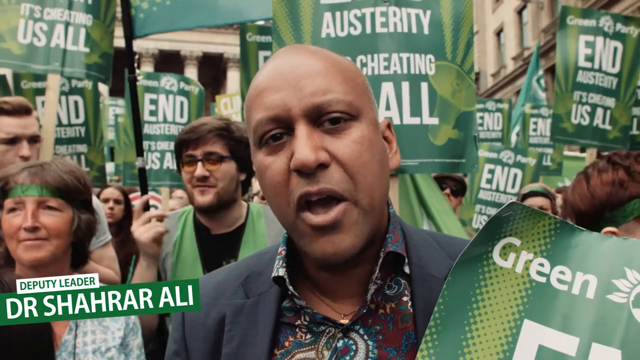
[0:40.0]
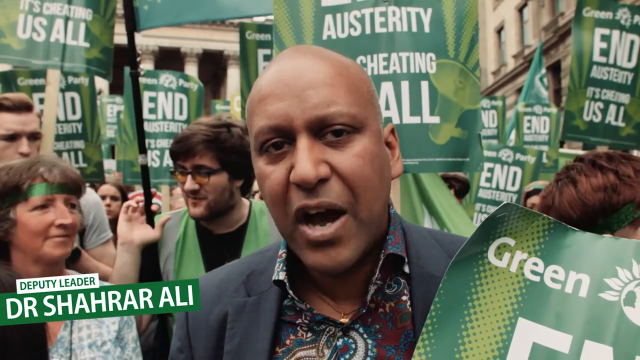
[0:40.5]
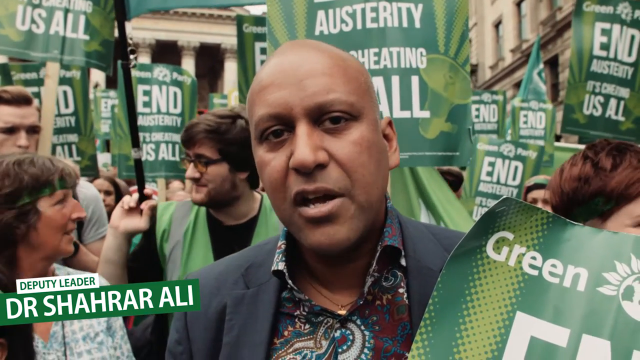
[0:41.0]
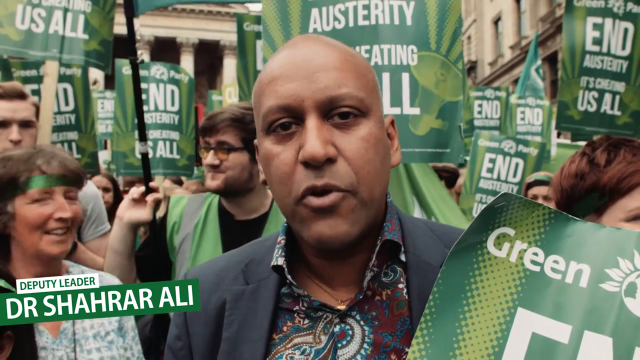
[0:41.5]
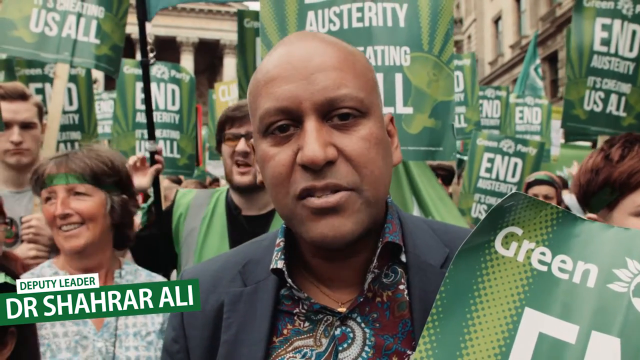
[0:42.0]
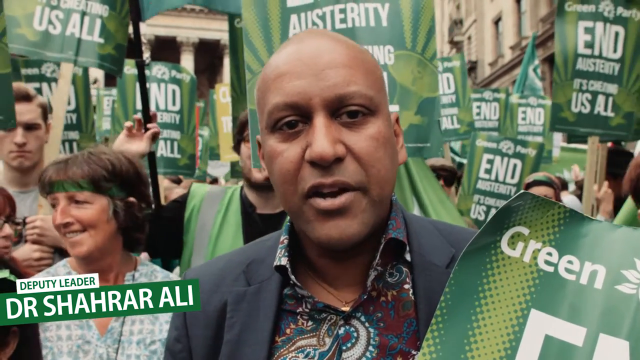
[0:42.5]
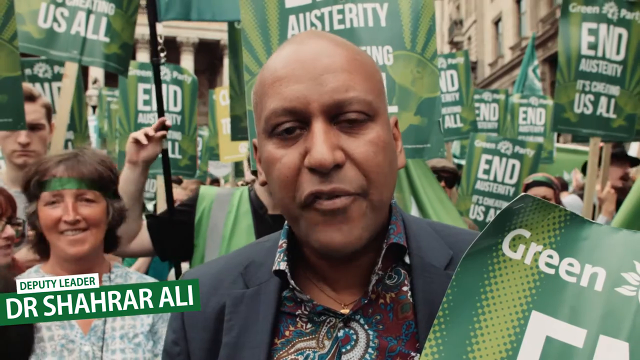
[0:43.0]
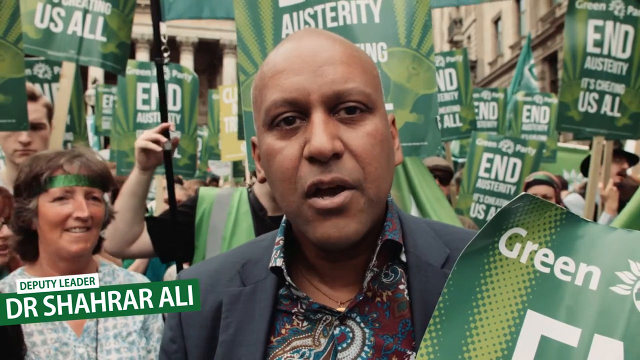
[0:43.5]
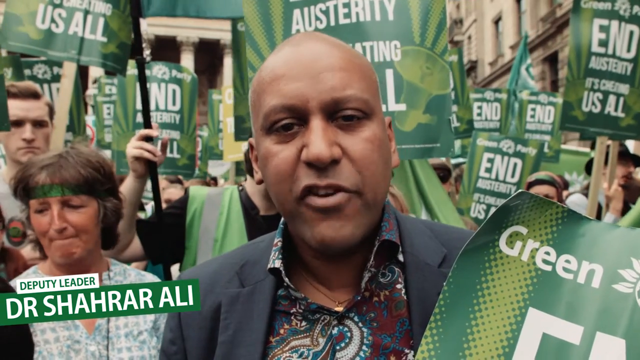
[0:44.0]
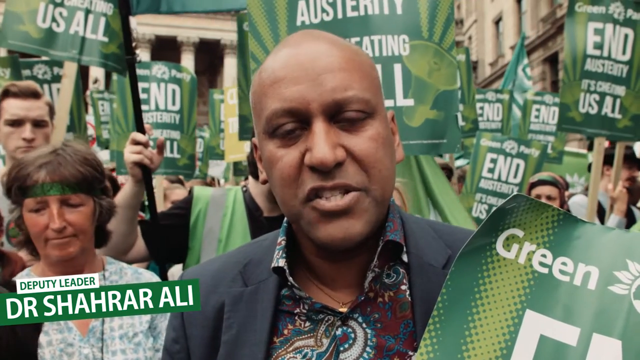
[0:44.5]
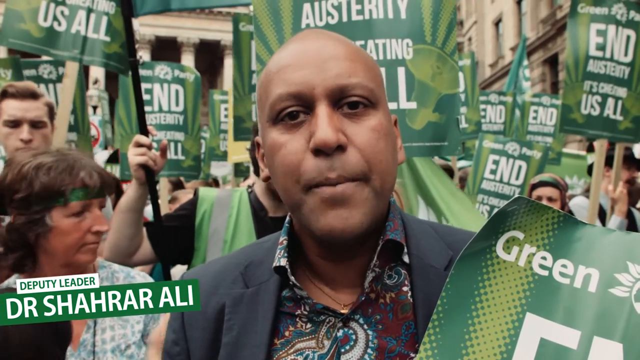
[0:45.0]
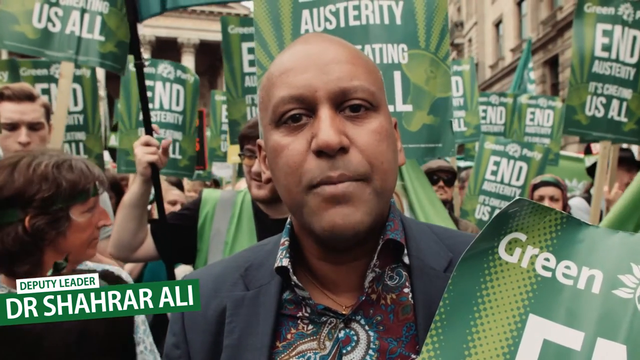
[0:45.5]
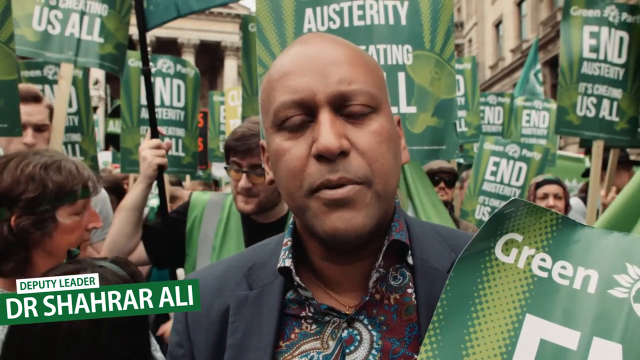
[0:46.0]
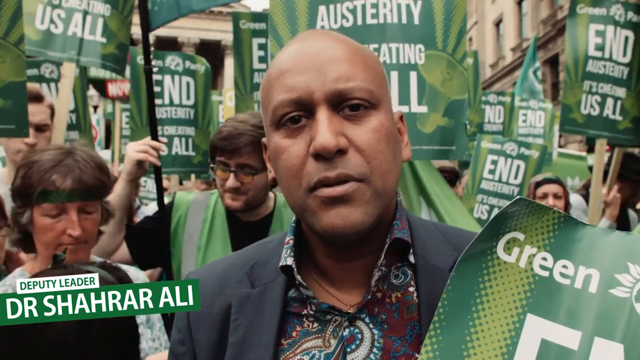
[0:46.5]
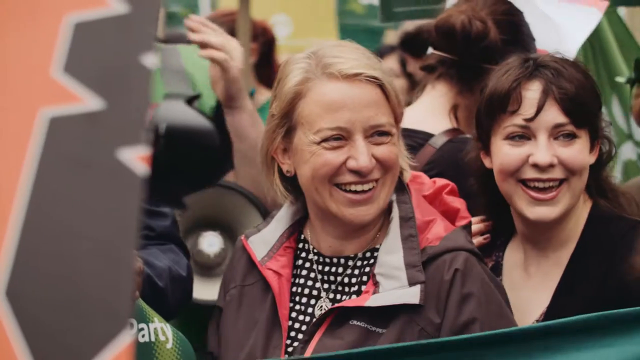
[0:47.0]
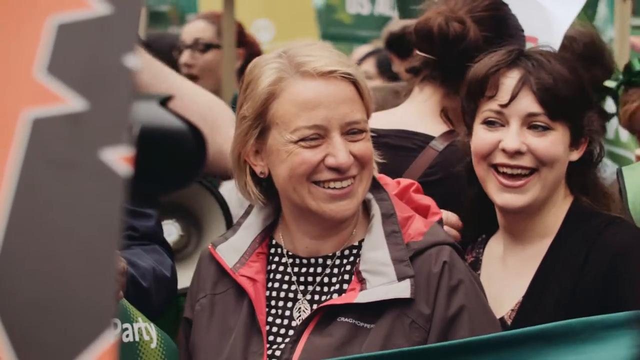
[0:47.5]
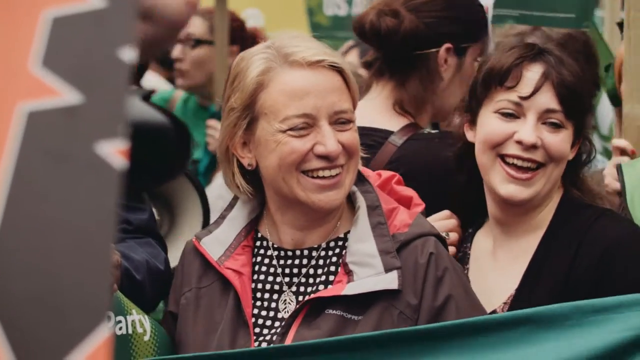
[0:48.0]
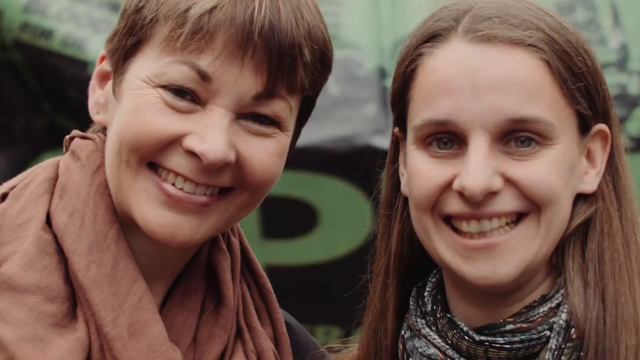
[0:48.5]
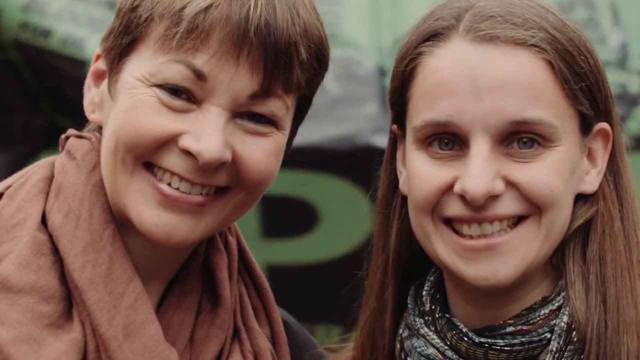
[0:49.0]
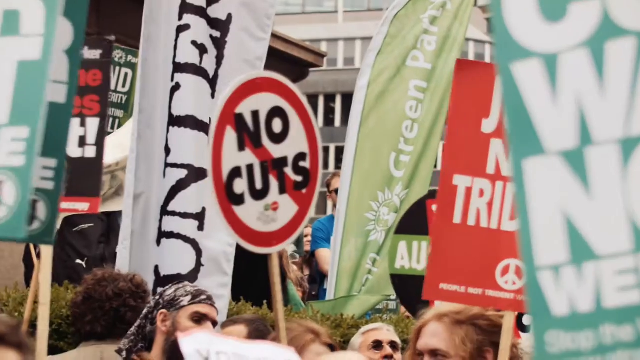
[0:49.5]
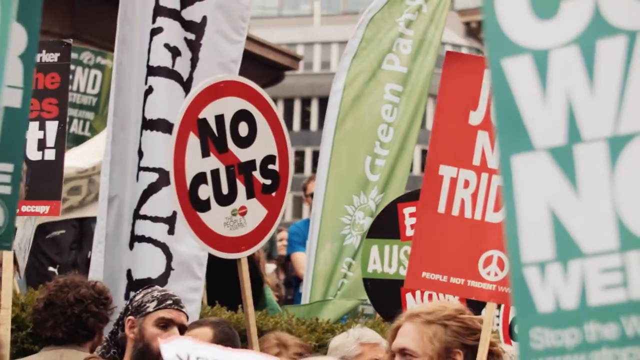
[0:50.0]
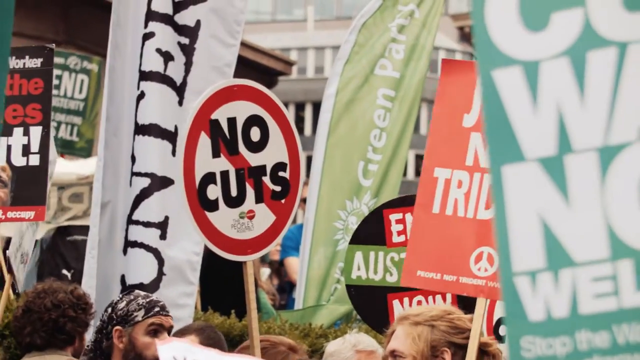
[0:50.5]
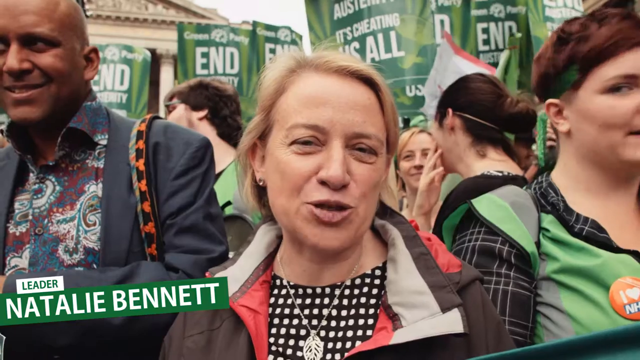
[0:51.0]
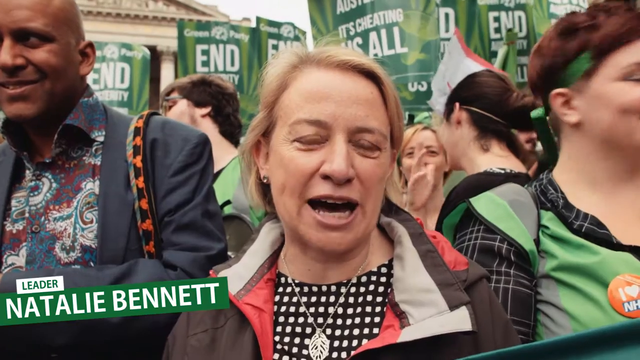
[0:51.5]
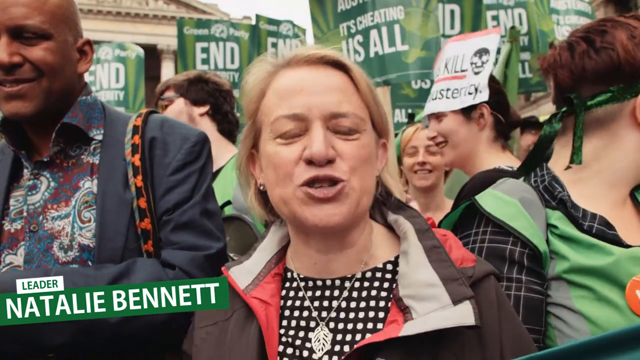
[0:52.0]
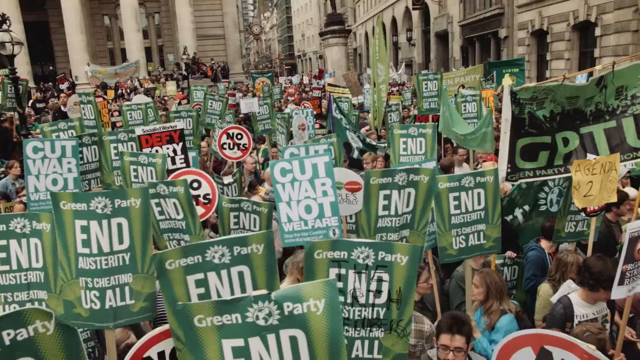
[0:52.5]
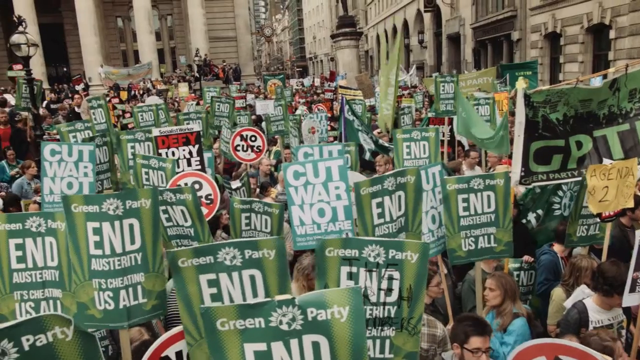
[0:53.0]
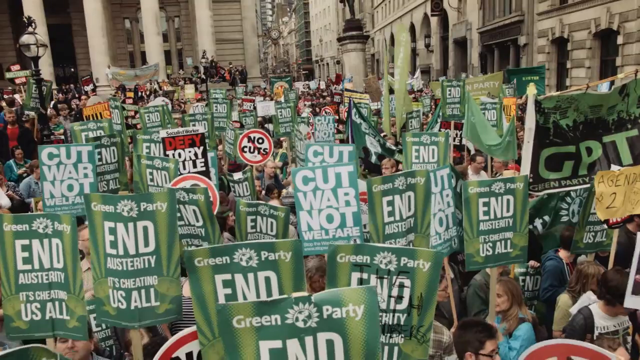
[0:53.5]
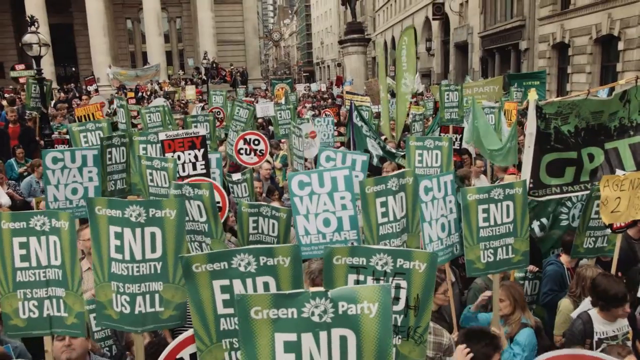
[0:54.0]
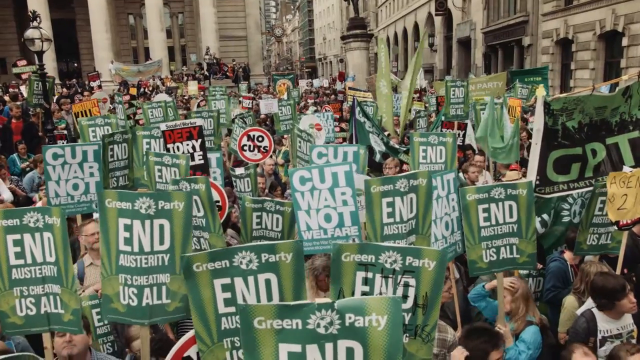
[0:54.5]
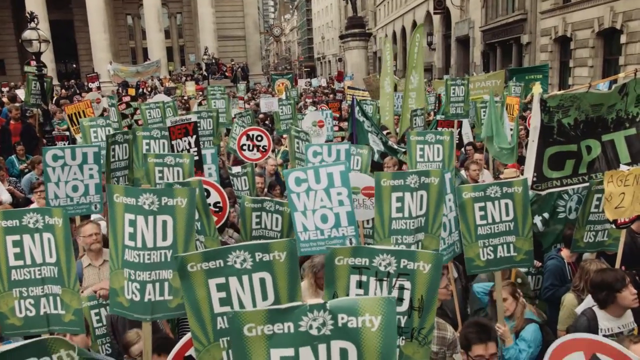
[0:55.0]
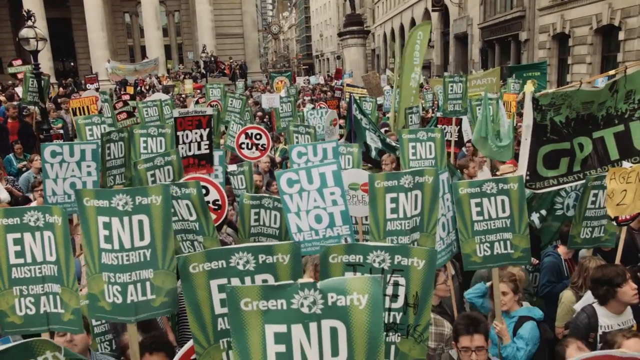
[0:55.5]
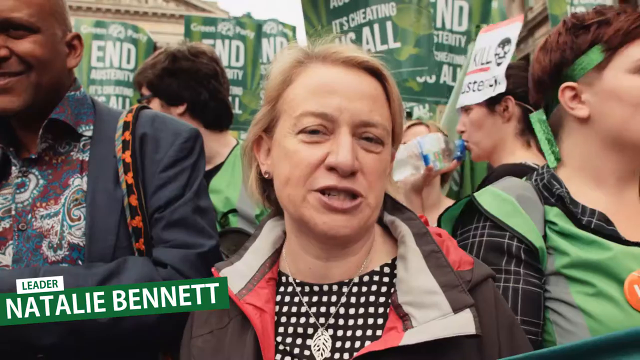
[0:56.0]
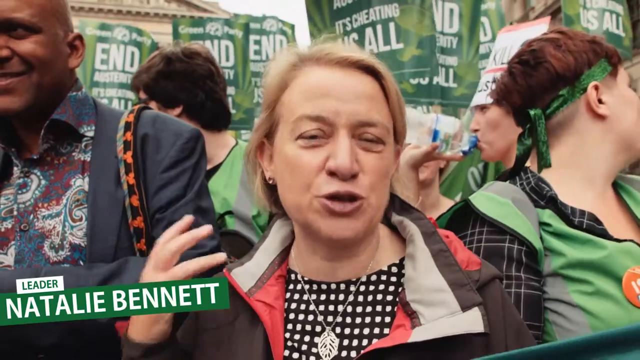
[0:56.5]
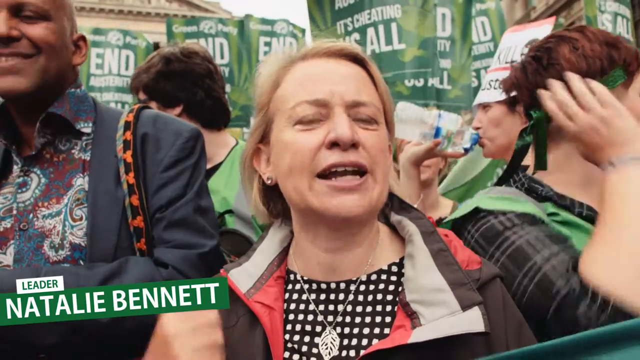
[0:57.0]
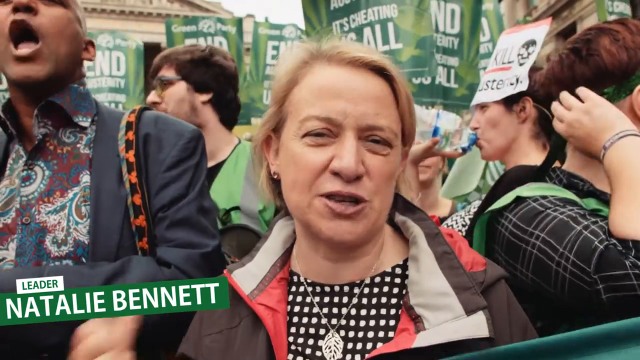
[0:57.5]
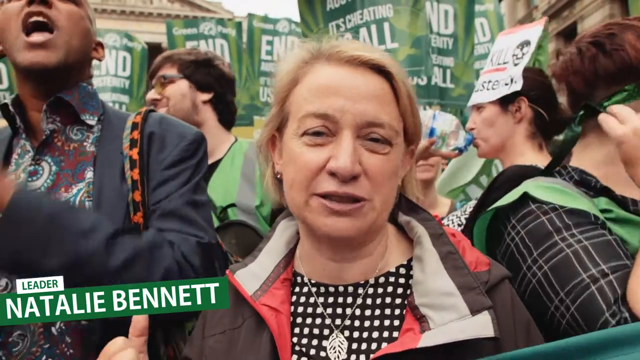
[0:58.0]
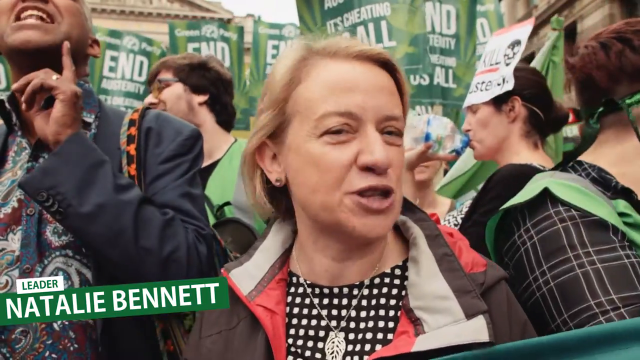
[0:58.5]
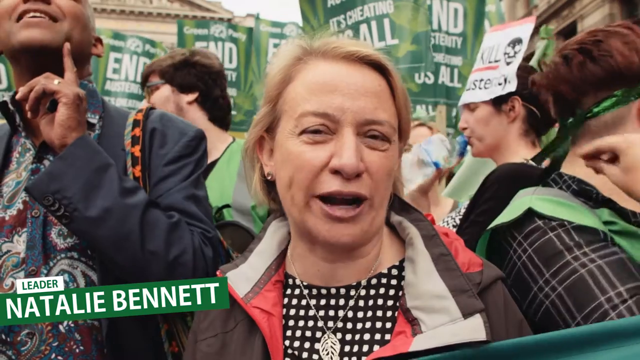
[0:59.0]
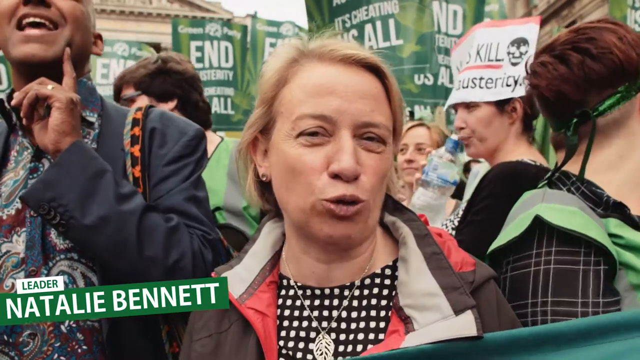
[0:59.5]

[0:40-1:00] Dr. Ali is bald. Just behind him is a Caucasian man with black-rimmed prescription glasses, a black undershirt and a good amount of hair, with a green placard above his head, as do the others. On the left side of the screen is a somewhat elderly Caucasian woman, probably in her late 40s, with a green headband. Dr. Ali speaks to the media. The camera pans quickly to two Caucasian women, one blonde and one a redhead, who are smiling and laughing. It then shows two more Caucasian women: one with a pixie cut and somewhat squinty eyes, and, to her right, one with much longer dark blonde hair. Placards read "no cuts," "green party," "cut war," and "end austerity" with "it's cheating us all." One of the women featured earlier is interviewed briefly; she is Natalie Bennett, one of the leaders. The man in the dark gray coat and multicolored polo is to her left. Many people wear green multicolored vests, apparently marking them as Green Party members.